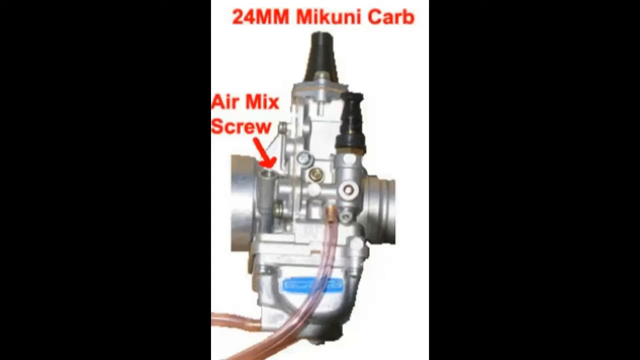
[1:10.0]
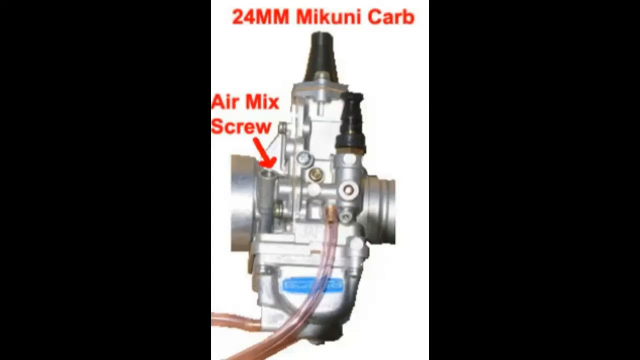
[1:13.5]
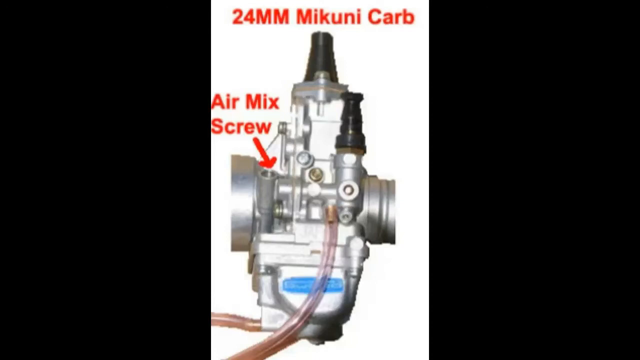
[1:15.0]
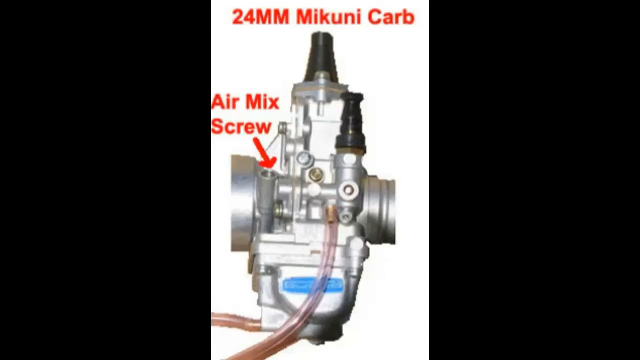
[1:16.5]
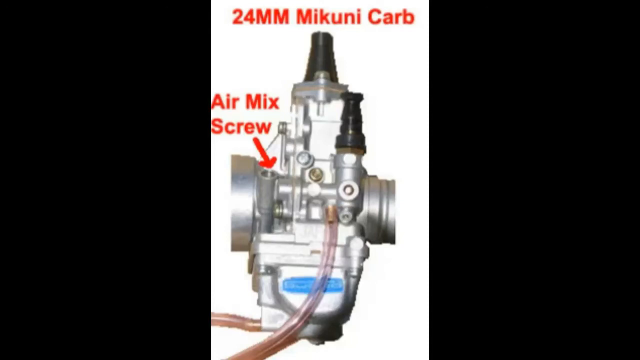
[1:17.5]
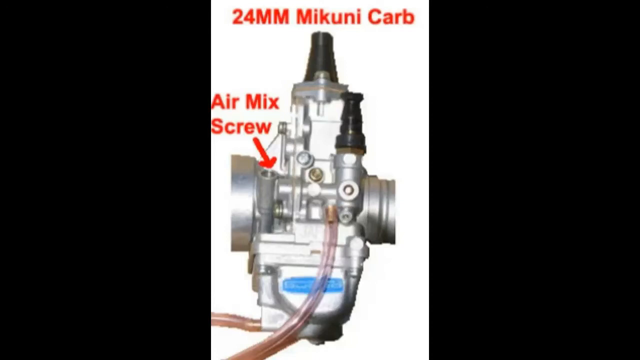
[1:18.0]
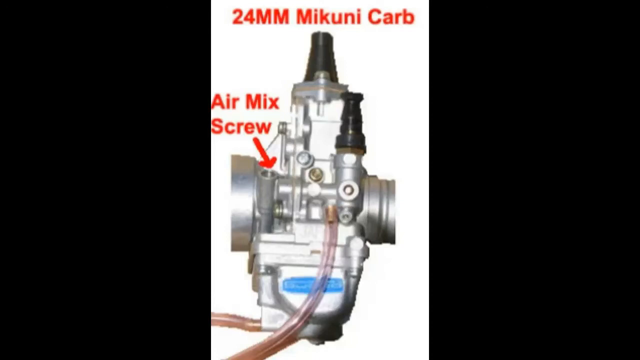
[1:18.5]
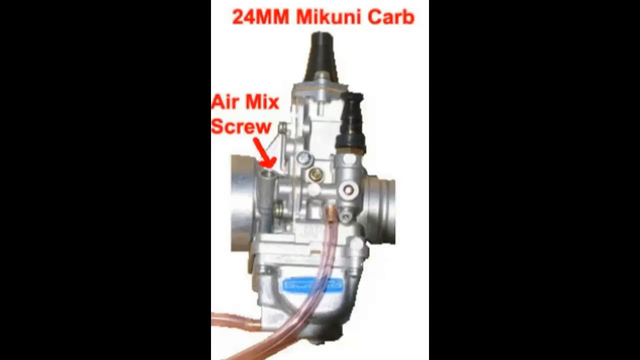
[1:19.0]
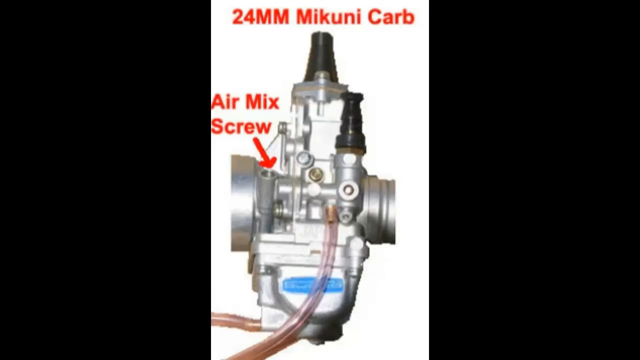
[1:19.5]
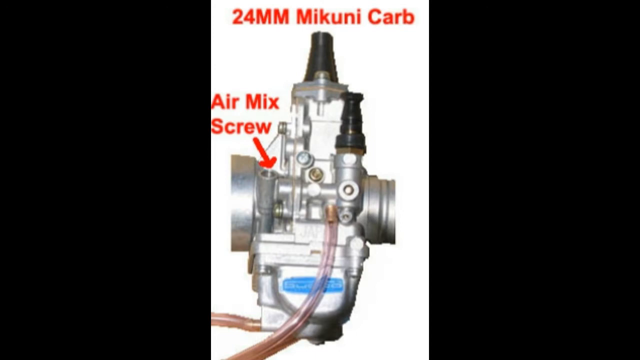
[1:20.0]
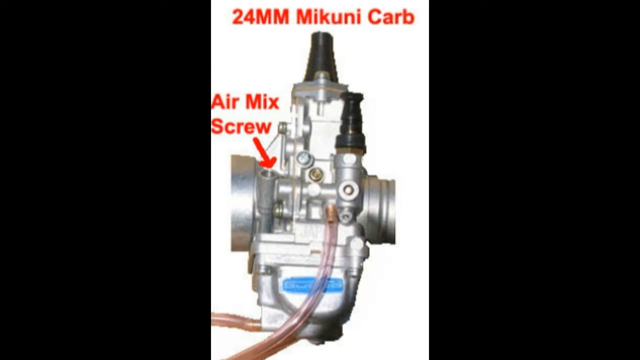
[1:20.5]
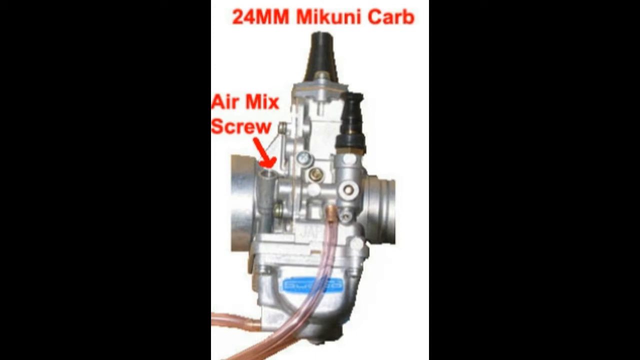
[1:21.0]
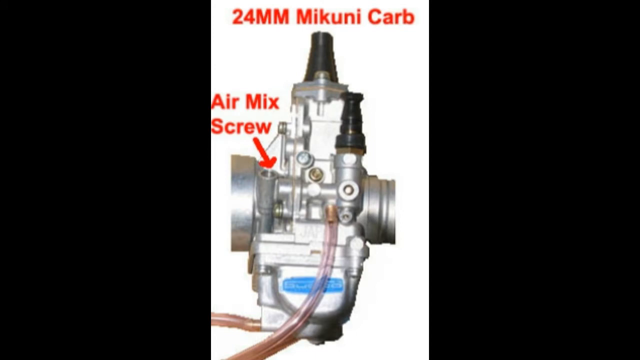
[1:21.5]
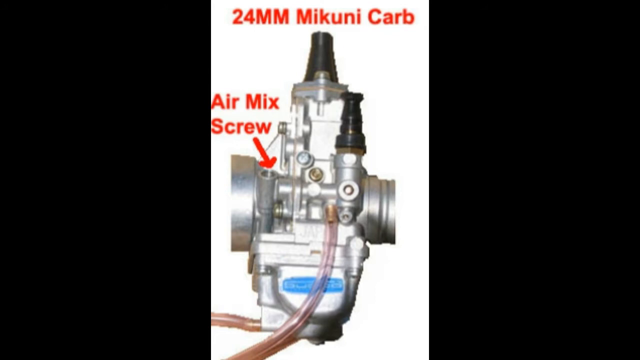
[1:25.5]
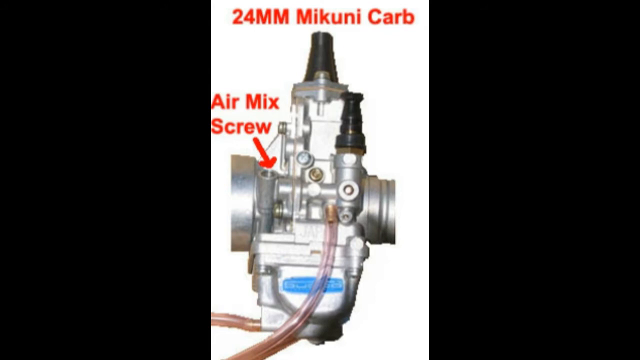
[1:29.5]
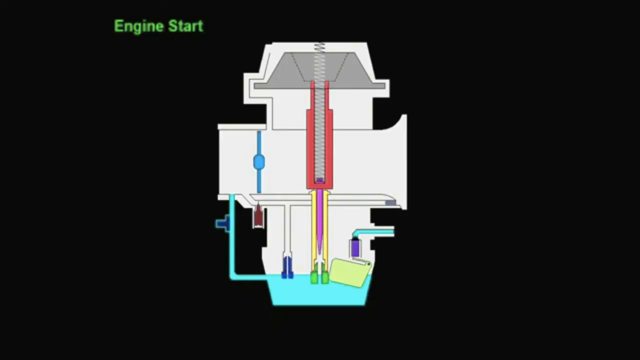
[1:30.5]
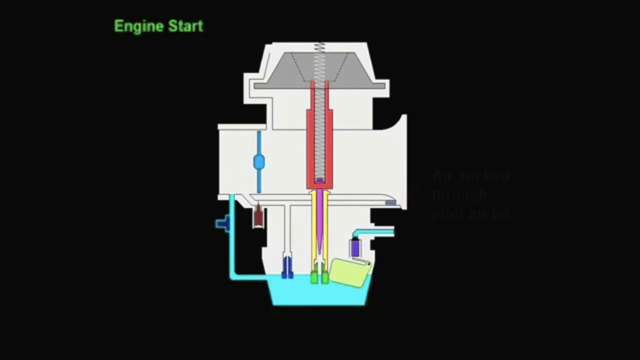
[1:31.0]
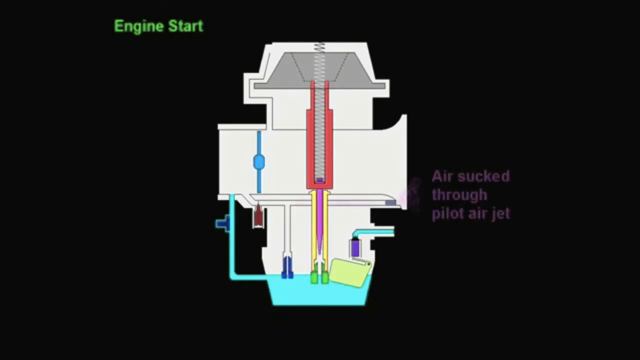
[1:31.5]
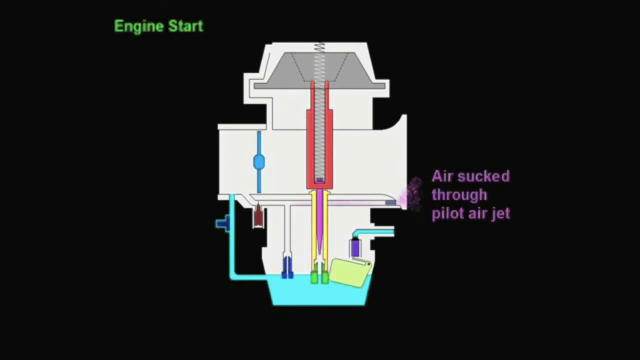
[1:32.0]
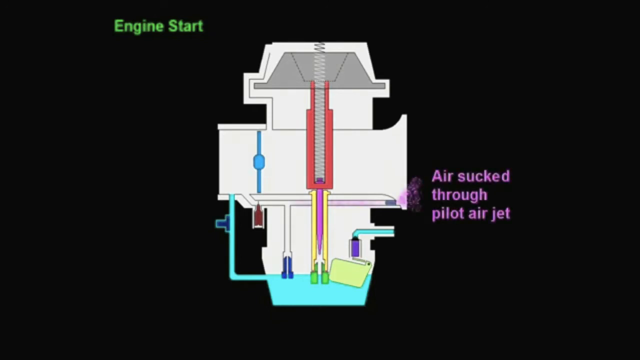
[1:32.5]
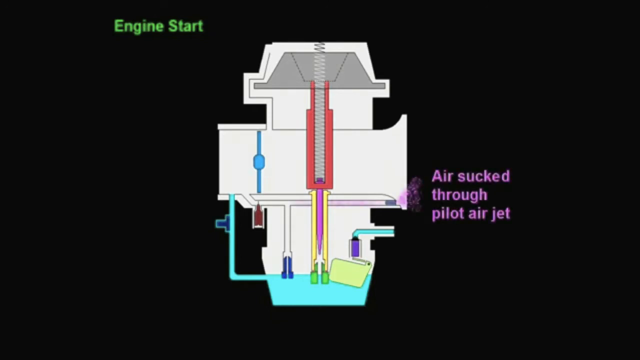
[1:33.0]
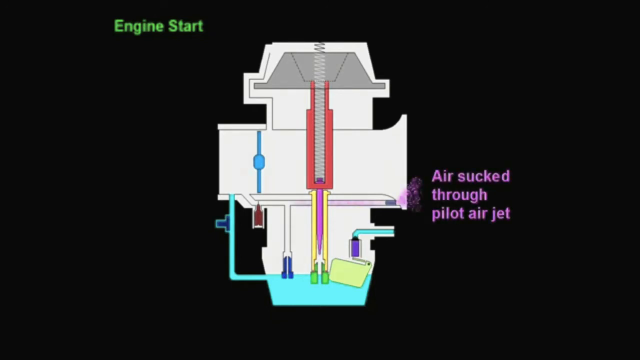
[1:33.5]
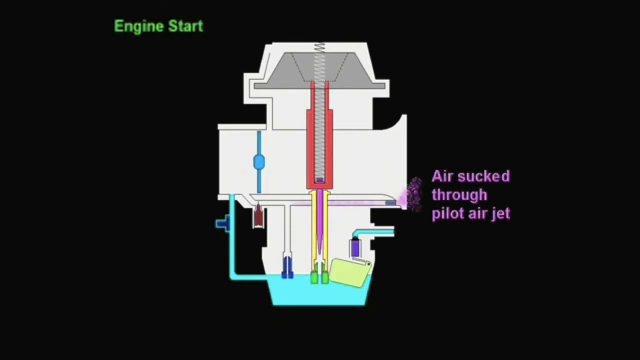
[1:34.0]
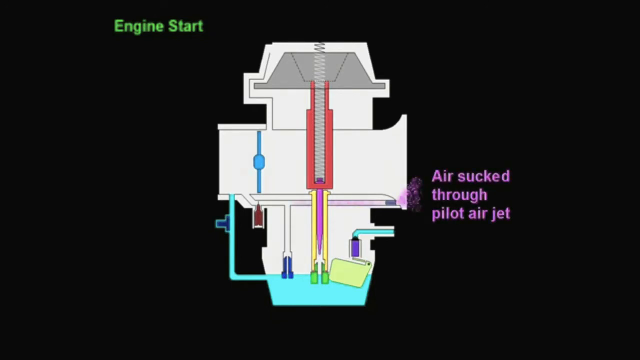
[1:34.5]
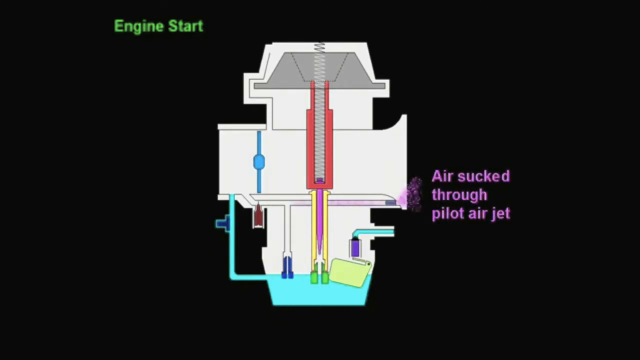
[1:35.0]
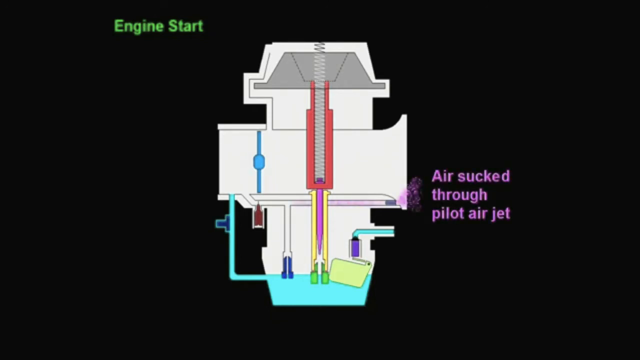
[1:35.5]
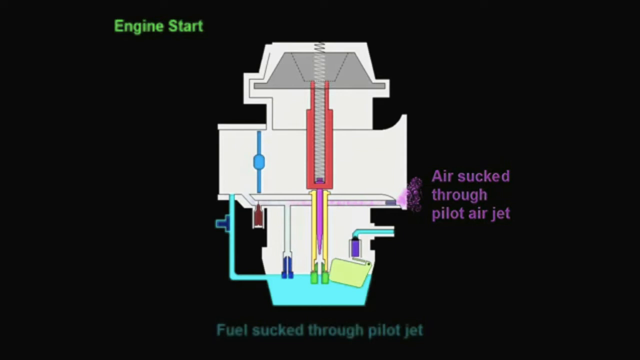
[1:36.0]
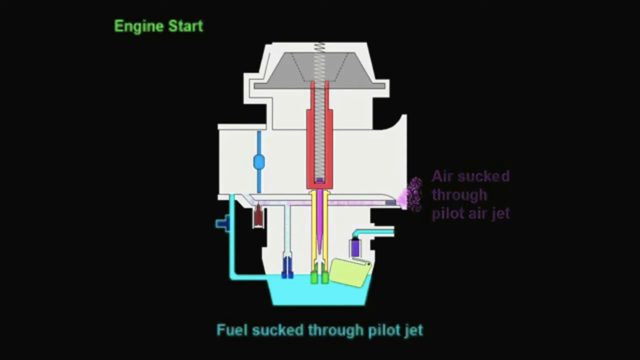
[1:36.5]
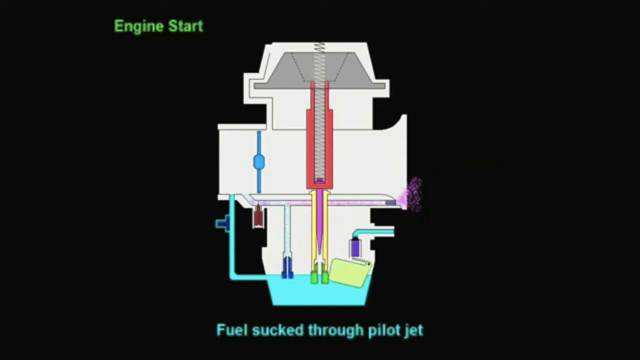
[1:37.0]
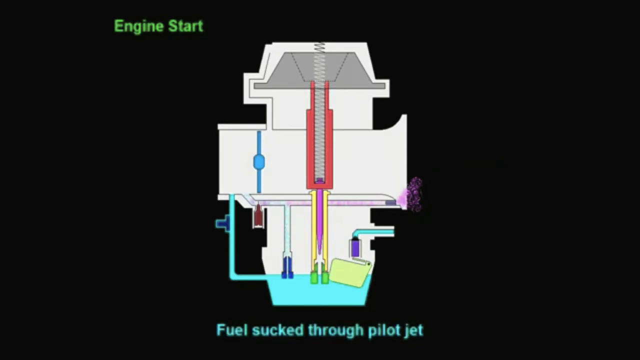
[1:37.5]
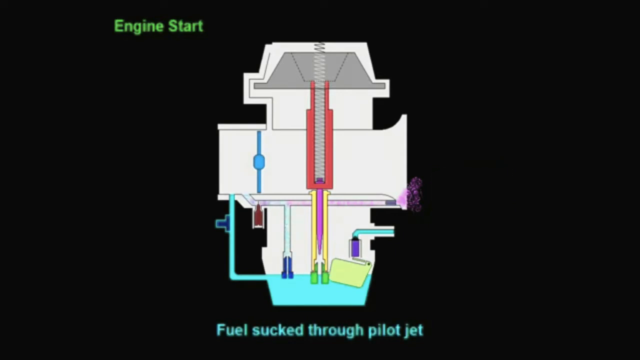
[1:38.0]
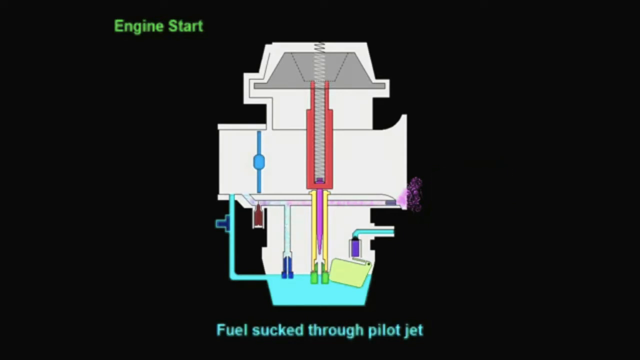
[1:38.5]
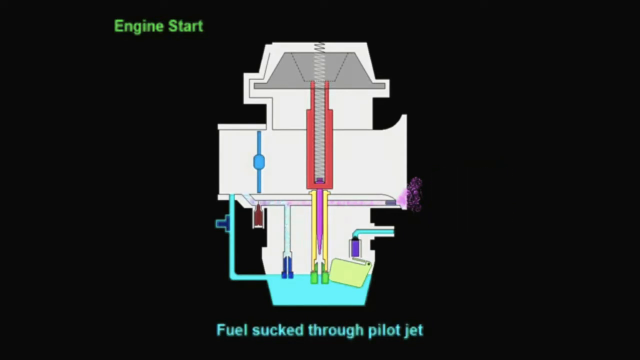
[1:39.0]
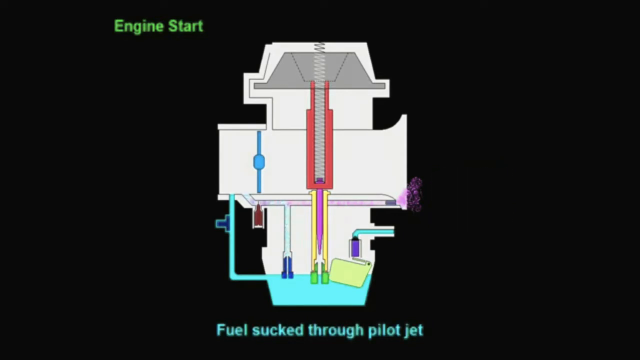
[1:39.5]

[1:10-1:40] The view returns to the 24mm Makuni carb and the air mix screw. The video then shows the inside of the engine, illustrating how the carb parts work with the engine as it starts. Air is shown sucked through the pilot air jet, and then fuel is sucked through the pilot jet. The idle screw and the air mix screw are shown.